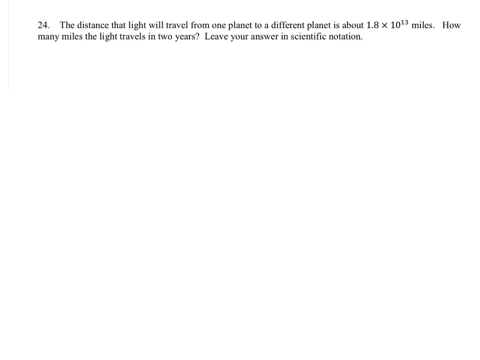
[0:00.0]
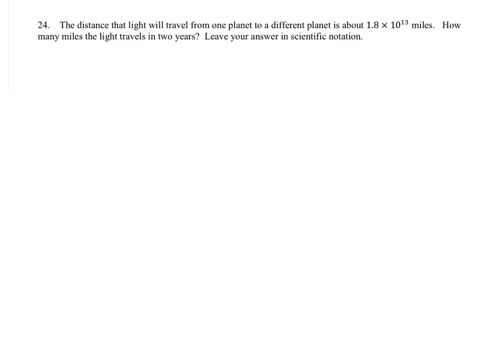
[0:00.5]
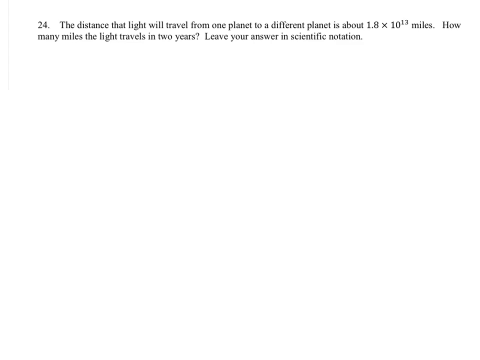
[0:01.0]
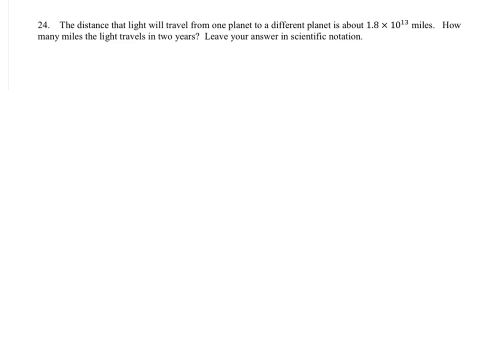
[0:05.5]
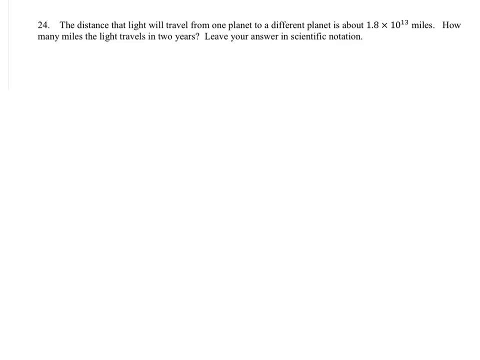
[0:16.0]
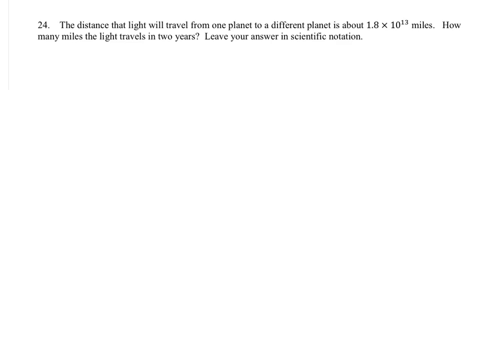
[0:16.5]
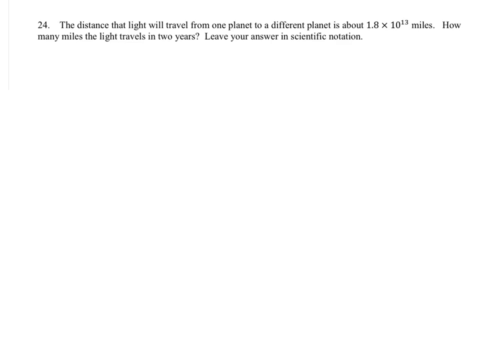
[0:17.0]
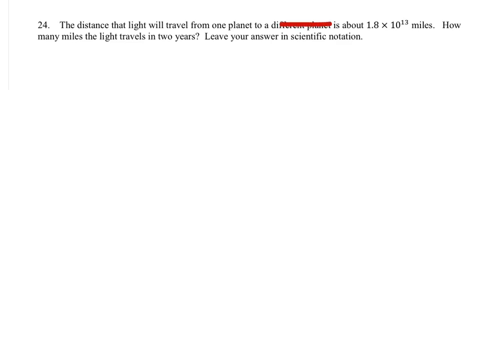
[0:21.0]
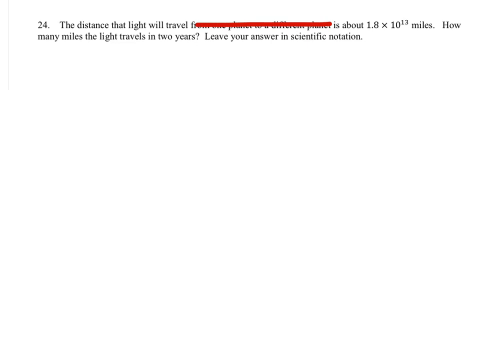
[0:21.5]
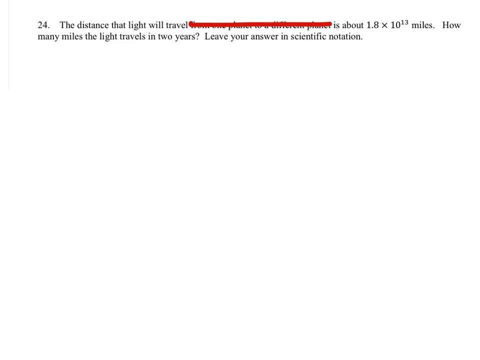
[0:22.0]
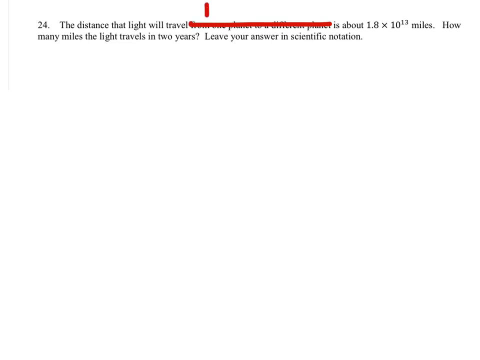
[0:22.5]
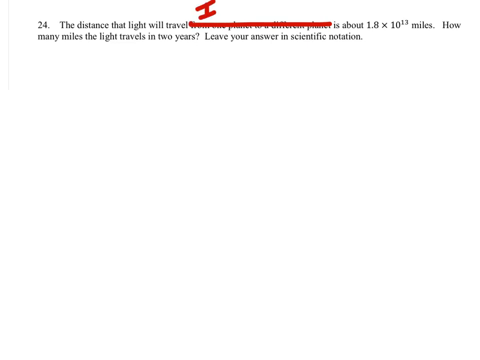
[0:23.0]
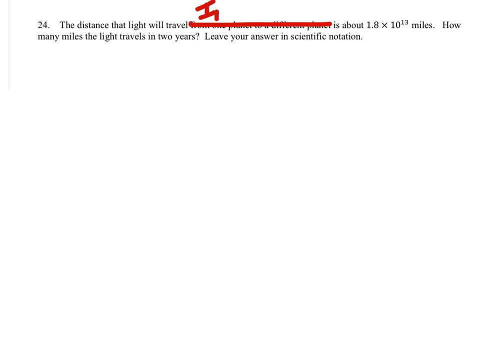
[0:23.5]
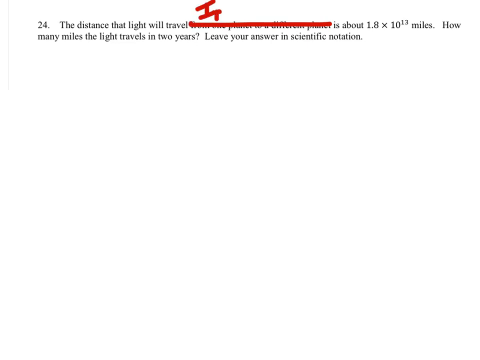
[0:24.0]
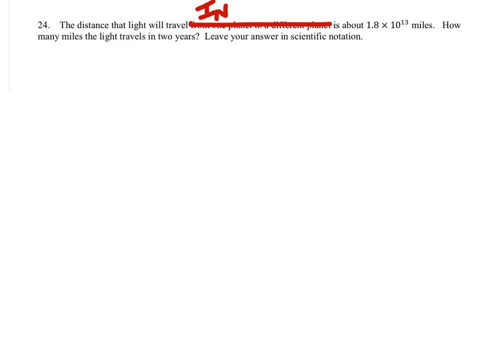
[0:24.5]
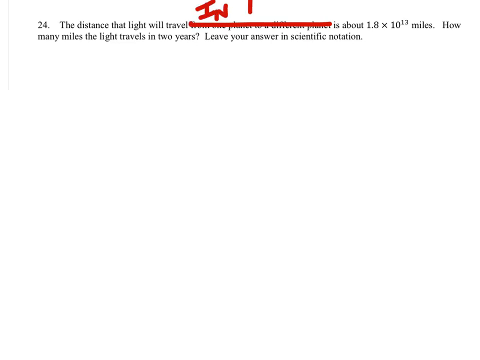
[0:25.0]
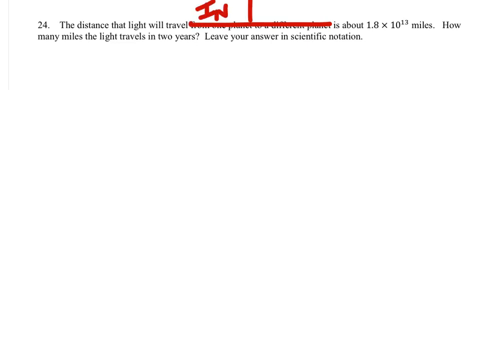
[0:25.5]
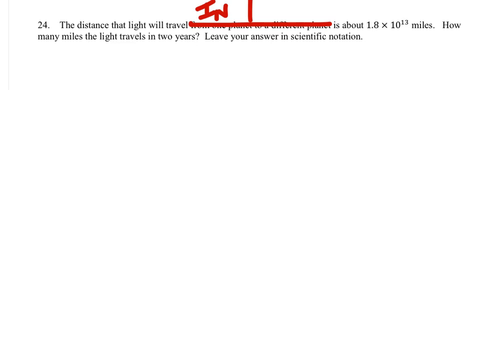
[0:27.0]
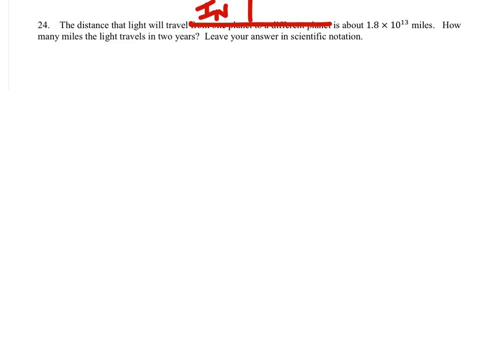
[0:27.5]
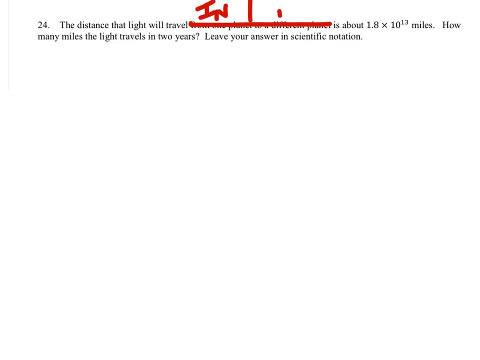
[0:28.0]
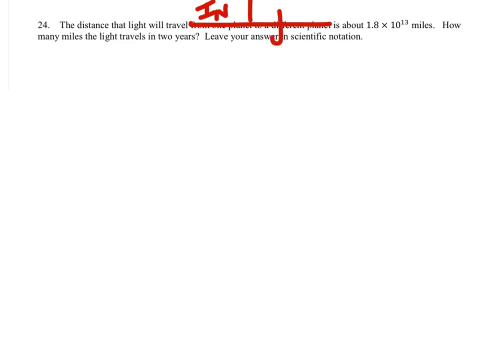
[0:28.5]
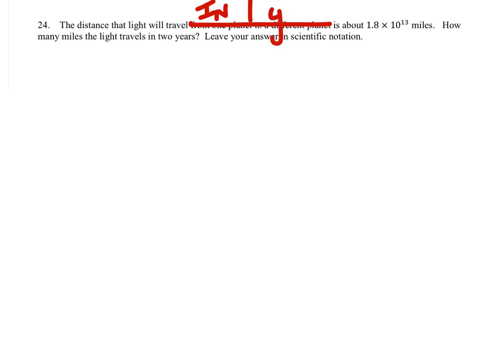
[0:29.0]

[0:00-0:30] Problem number 24 of a math tutorial is presented. It states that the distance light will travel from one planet to a different planet is about 1.8 times 10 to the 13th power miles, asks how many miles the light will travel in two years, and asks for the answer in scientific notation.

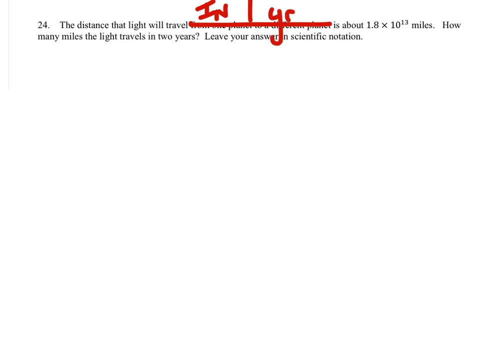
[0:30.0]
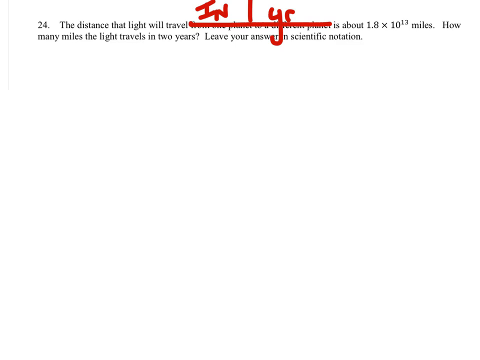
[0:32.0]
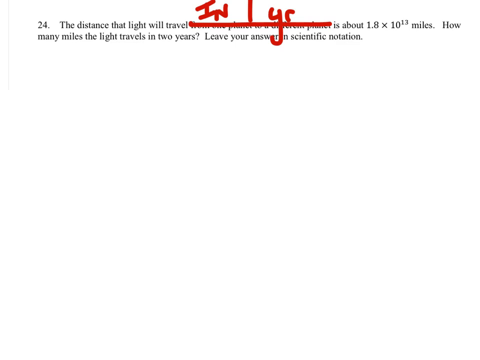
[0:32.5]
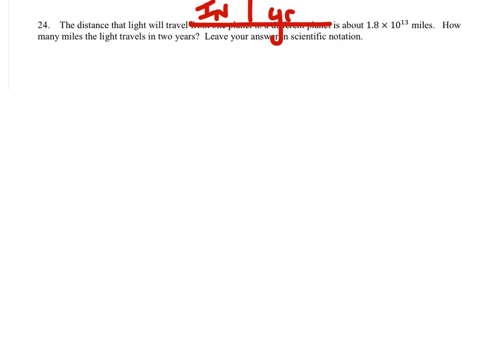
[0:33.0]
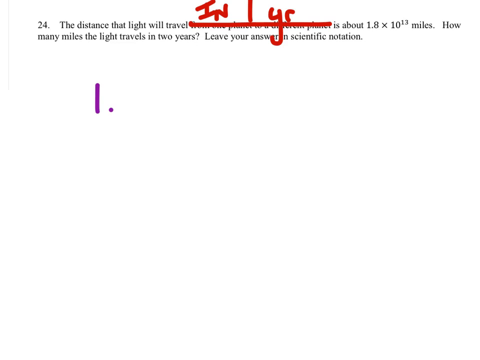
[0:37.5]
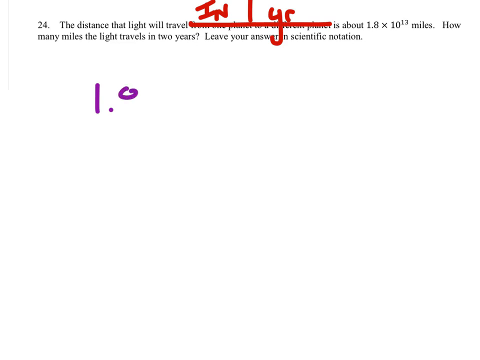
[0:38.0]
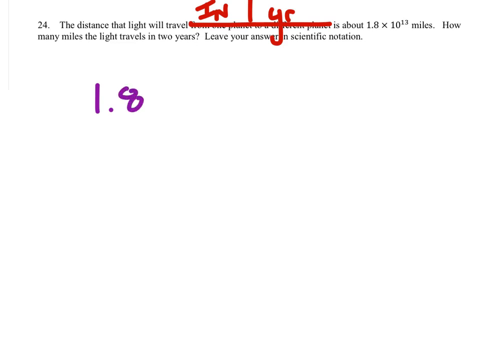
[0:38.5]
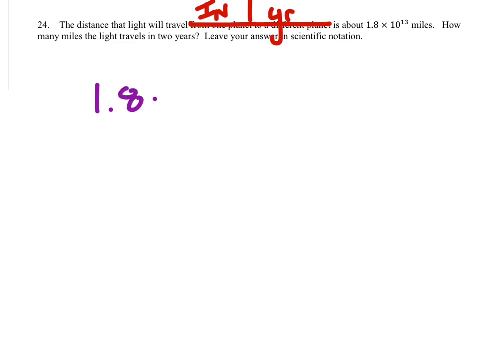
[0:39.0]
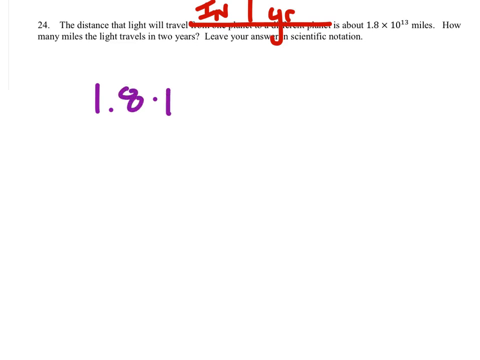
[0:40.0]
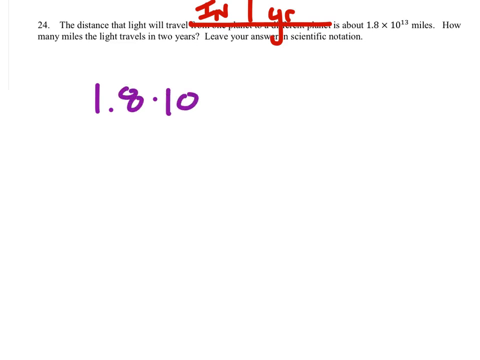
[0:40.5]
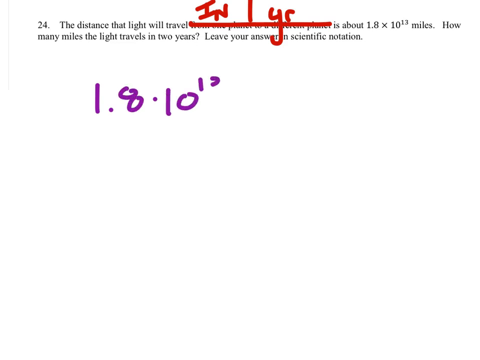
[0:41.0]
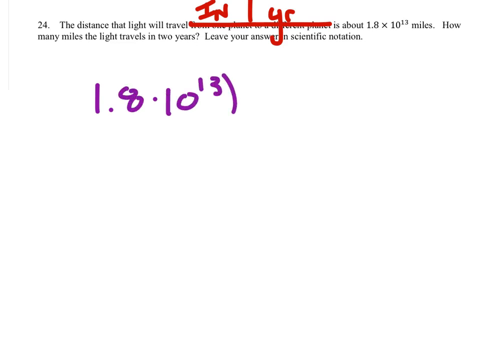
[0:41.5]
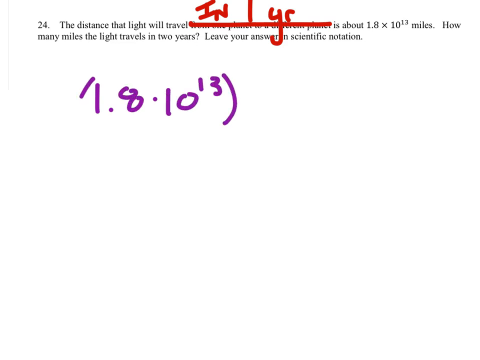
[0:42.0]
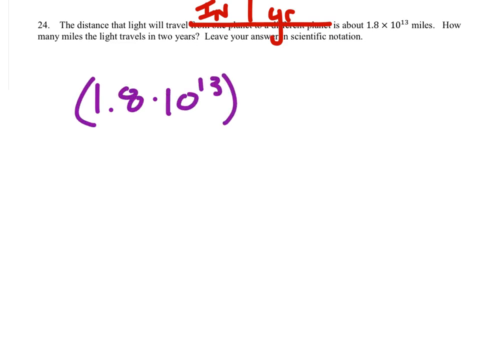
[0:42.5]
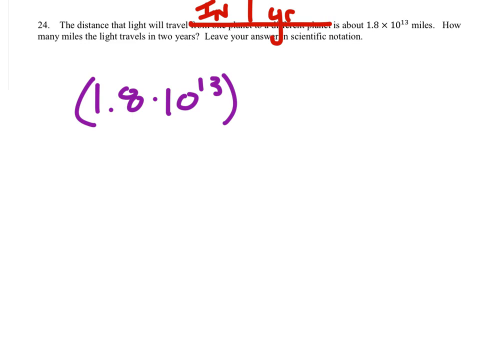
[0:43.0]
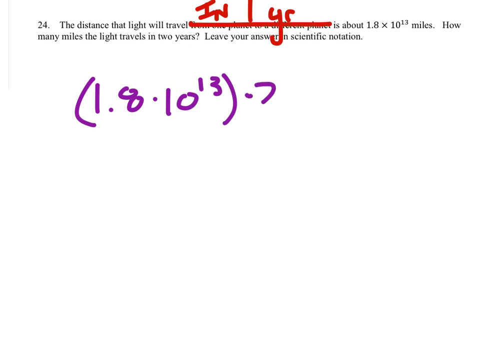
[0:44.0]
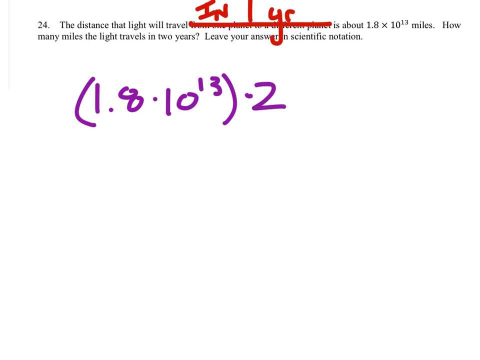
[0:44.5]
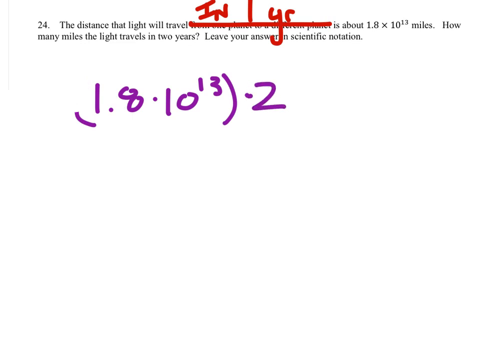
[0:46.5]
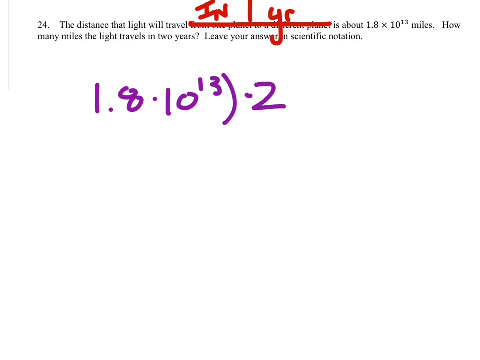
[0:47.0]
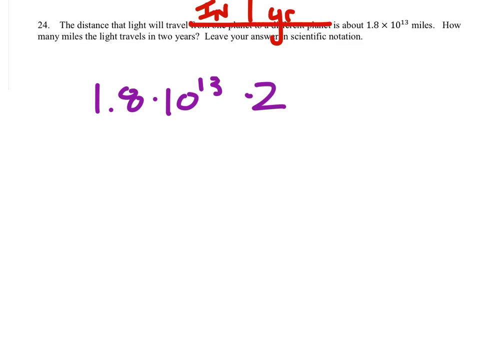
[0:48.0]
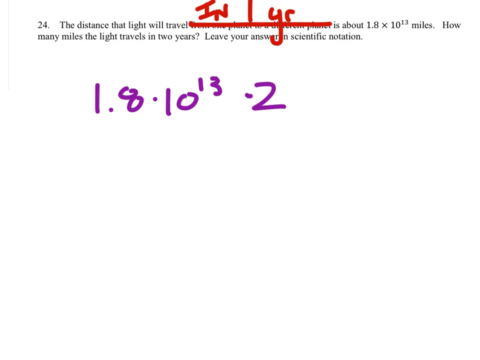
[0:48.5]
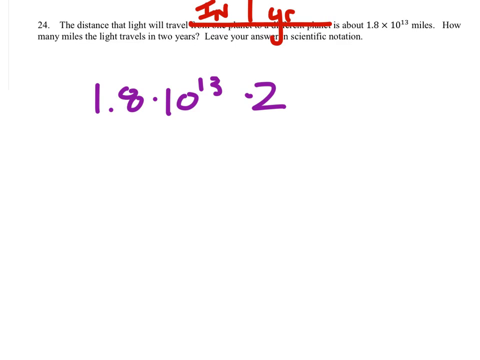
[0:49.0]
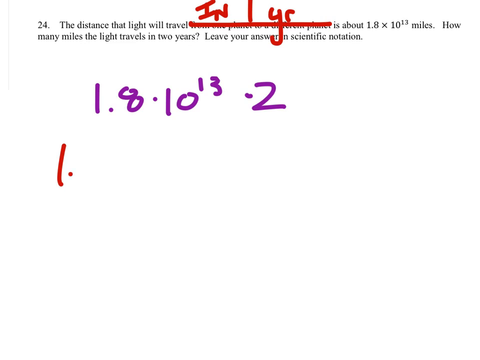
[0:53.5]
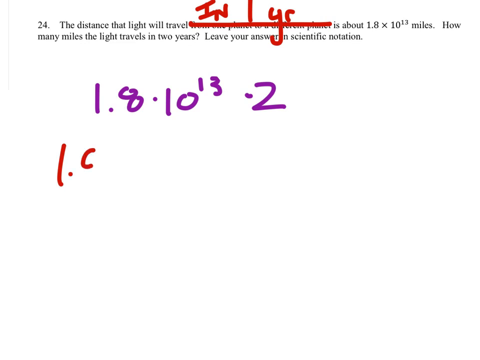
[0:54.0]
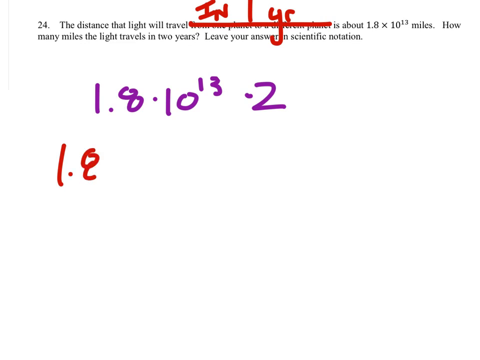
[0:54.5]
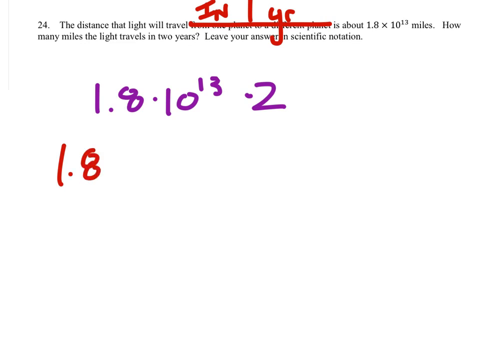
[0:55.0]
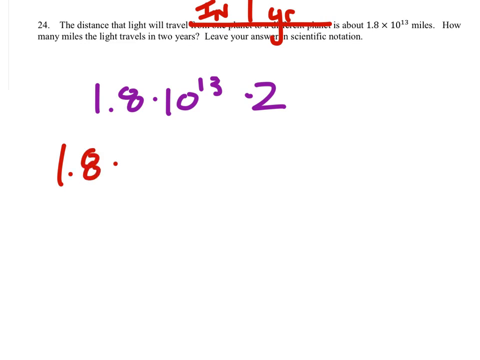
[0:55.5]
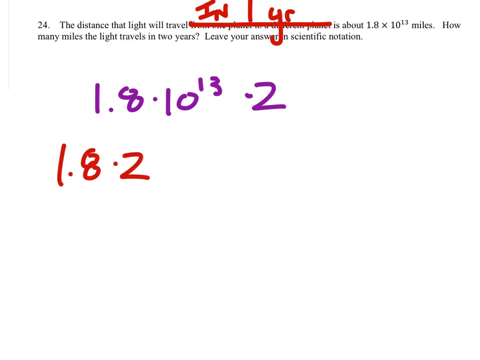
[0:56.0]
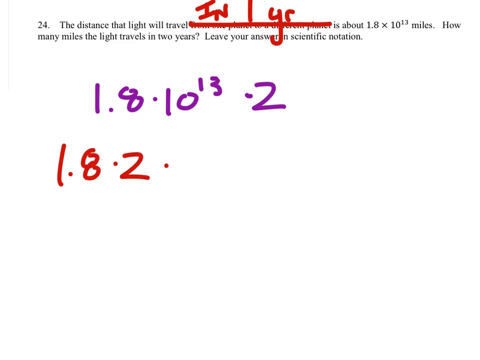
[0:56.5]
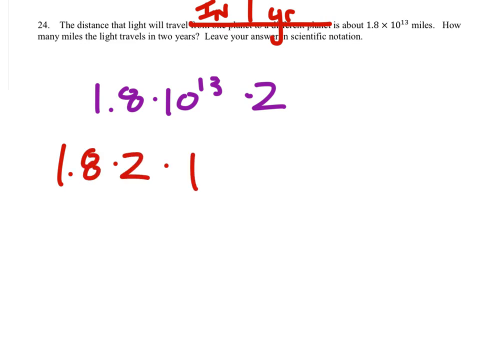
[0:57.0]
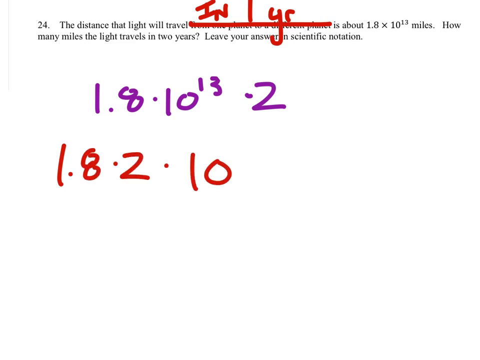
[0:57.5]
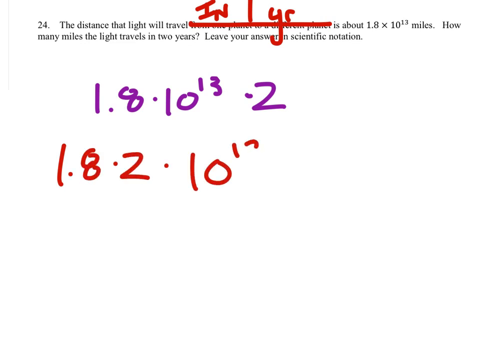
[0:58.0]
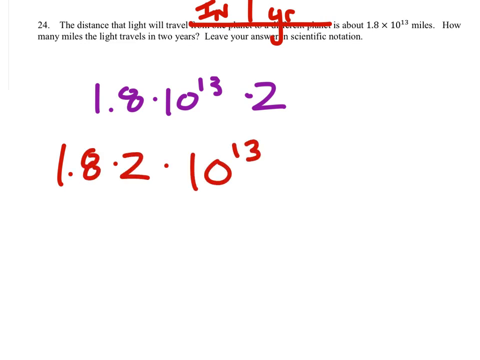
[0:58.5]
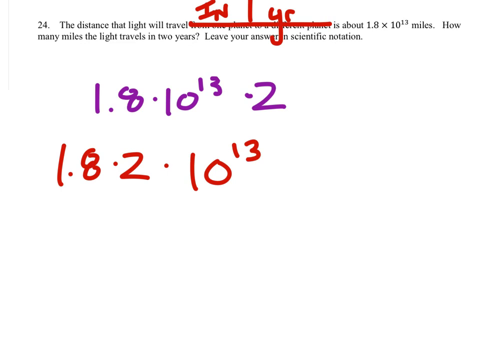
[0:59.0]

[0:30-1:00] Problem number 24 is presented: the distance light will travel from one planet to a different planet is about 1.8 times 10 to the 13th power miles; how many miles will the light travel in two years, with the answer left in scientific notation. The one-year distance, 1.8 times 10 to the 13th power miles, is taken and multiplied by two to account for two years, giving 1.8 times 10 to the 13th power multiplied by 2.